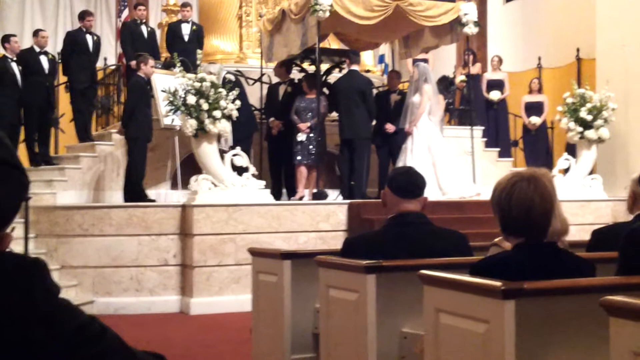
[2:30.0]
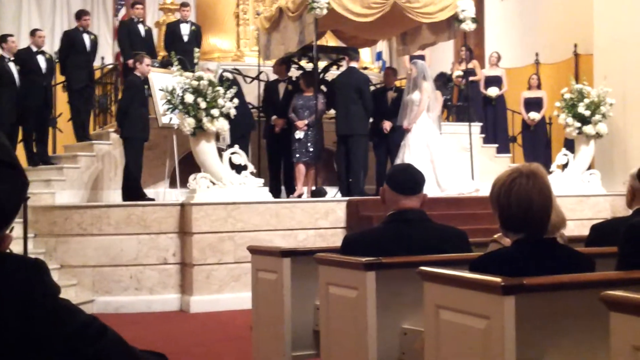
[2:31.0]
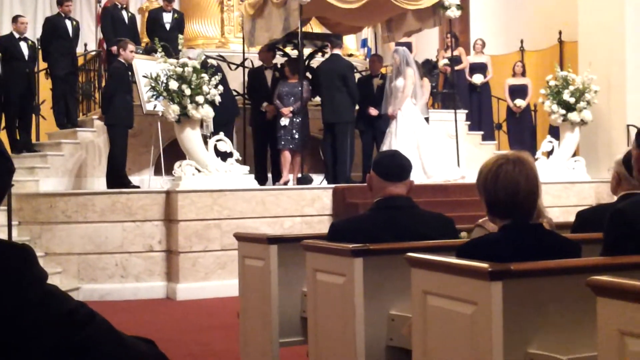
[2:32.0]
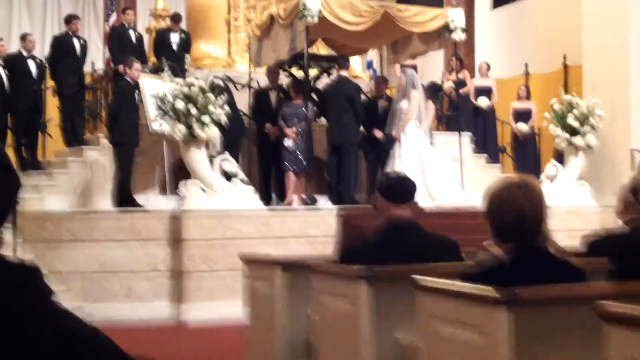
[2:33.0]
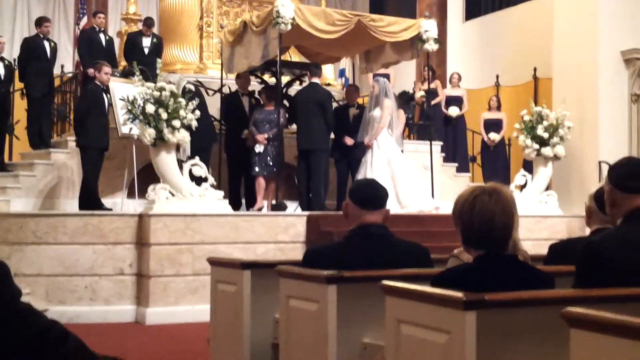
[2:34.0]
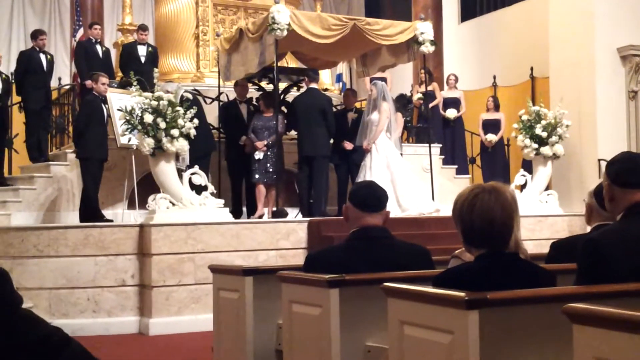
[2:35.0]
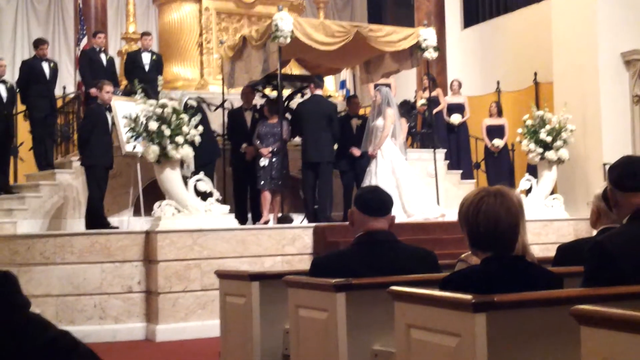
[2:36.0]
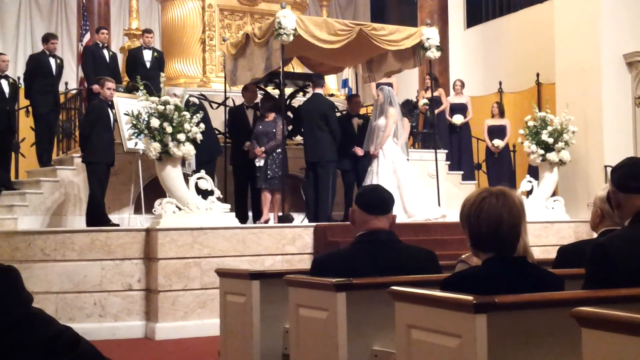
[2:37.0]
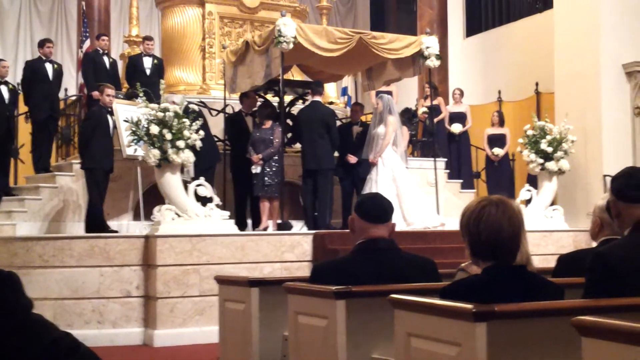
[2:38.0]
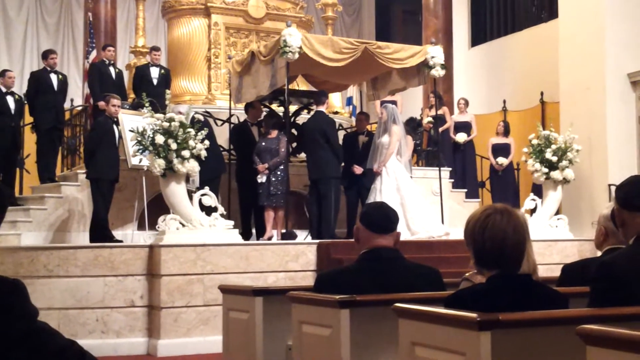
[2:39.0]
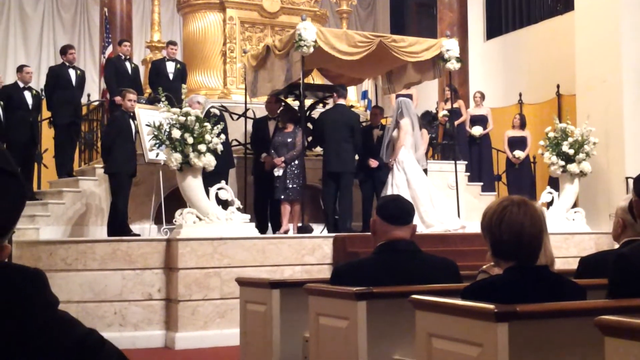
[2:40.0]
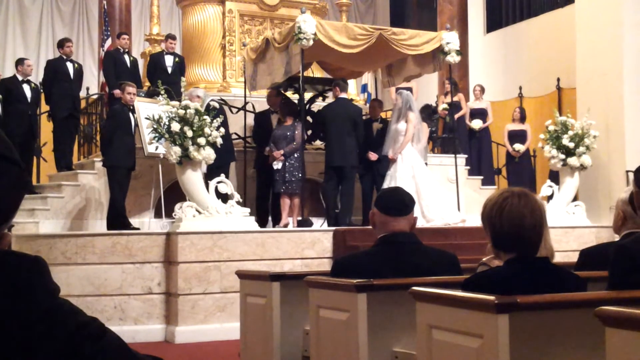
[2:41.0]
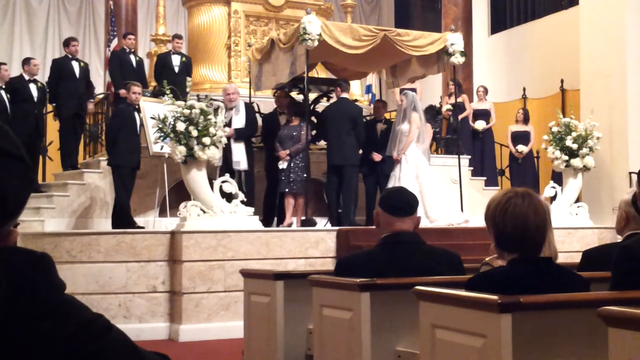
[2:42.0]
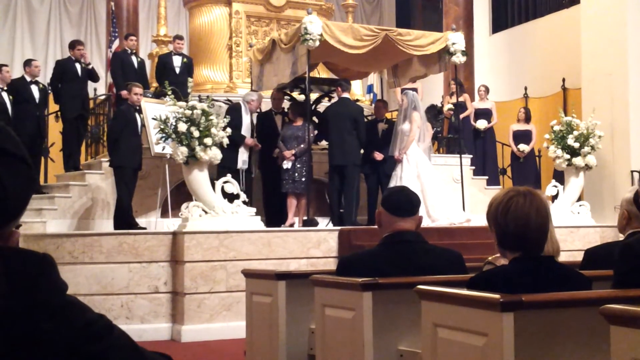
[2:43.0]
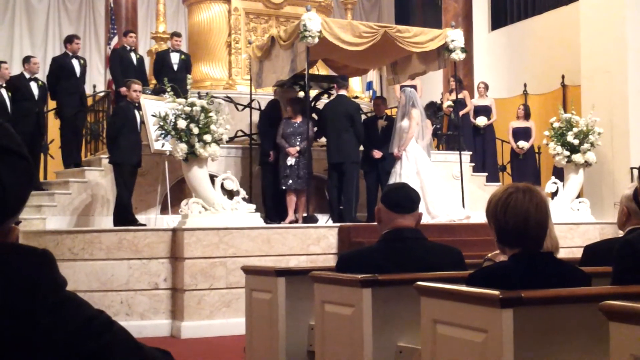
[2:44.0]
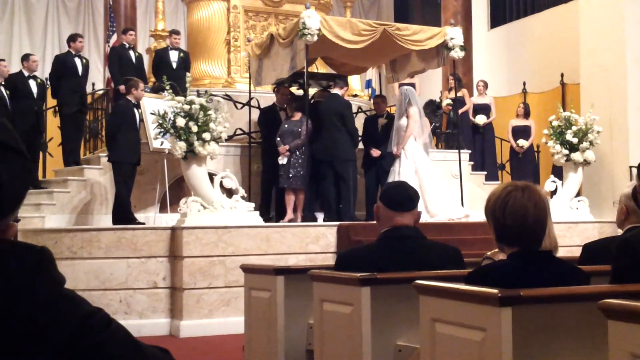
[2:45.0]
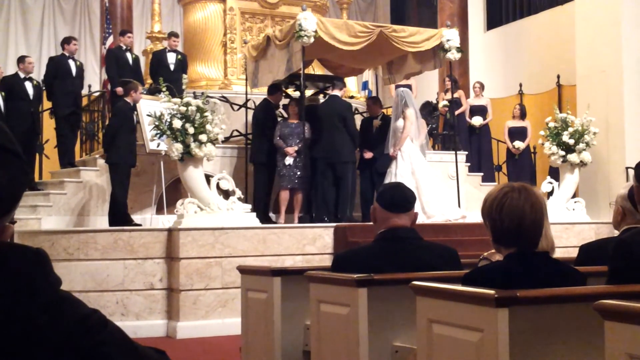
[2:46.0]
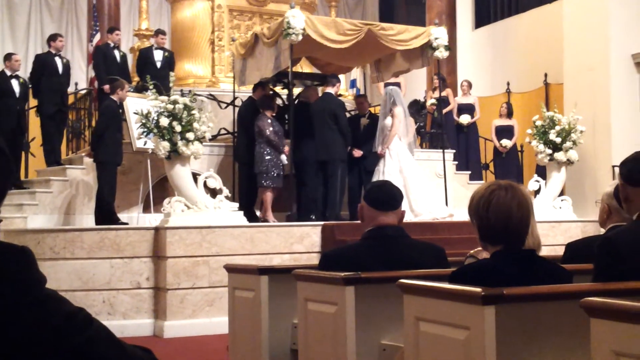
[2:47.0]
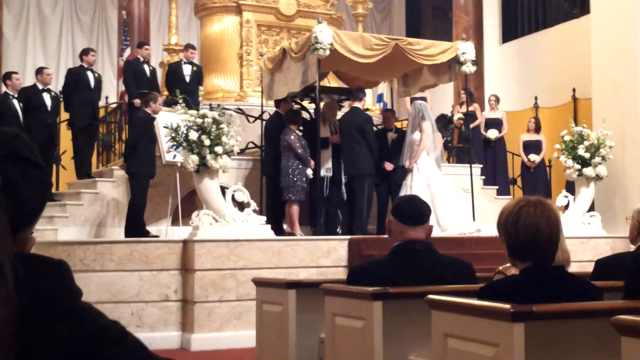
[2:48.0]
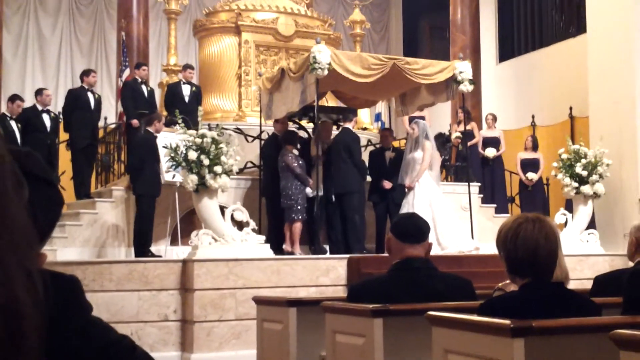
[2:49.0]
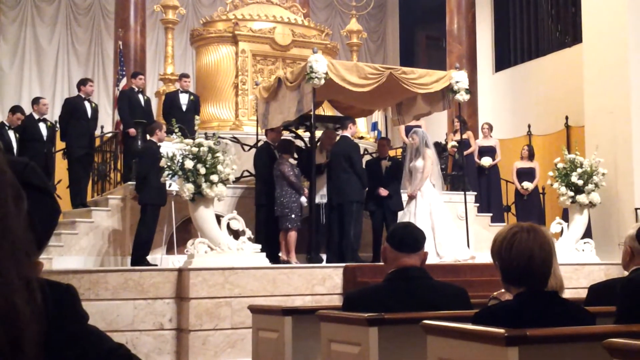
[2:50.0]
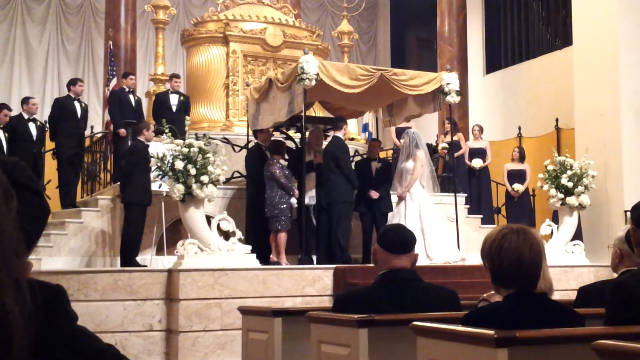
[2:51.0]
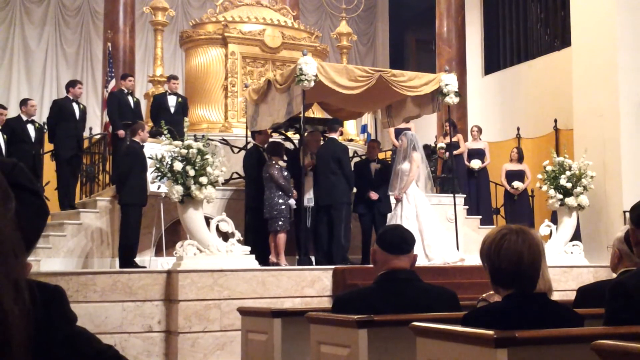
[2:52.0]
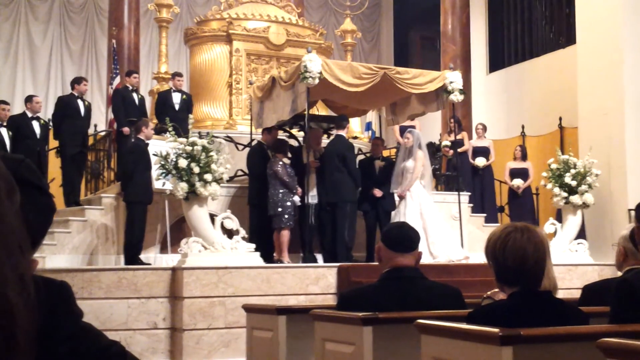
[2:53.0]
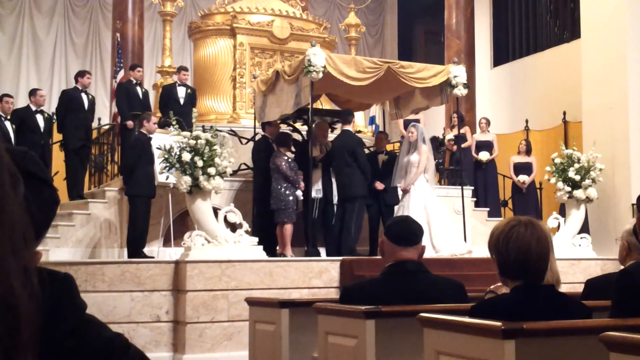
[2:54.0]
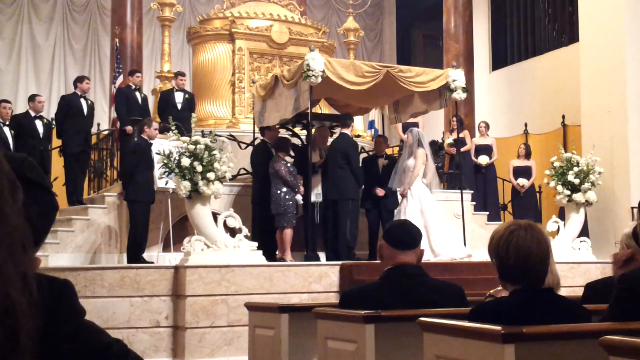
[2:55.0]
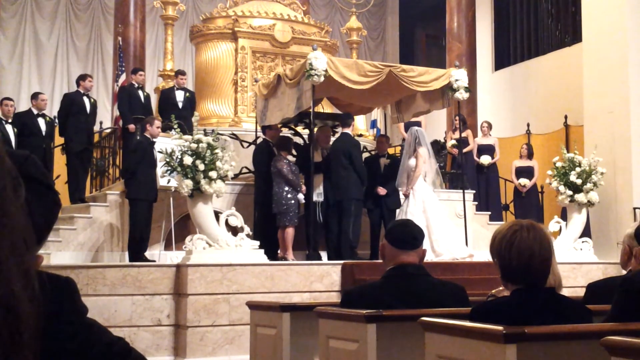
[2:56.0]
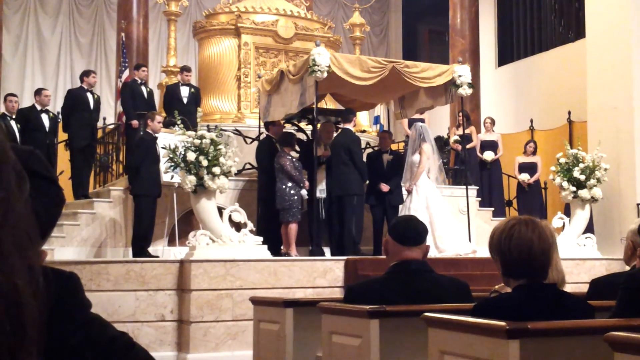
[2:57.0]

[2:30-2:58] The wedding ceremony in the church is seen from behind some pews, with the camera angled at the altar and a few people in the pews facing the altar. There is red carpet, with stone stairs leading up to the altar. Sets of stairs off to the sides lead up and behind the altar, with the groomsmen on the left and the bridesmaids on the right. A canopy with golden fabric on top and two elegant vases with bouquets of flowers make up the altar. Under the canopy, the bride and groom in traditional wedding attire face each other but look at the minister, and a few other people are also under the canopy. The minister is off to the left, not under the canopy, standing behind one of the bouquets of flowers, which obscures the view, and looking down at something. The camera work is slightly shaky throughout. The minister then turns back towards the bride and groom, walks back under the canopy, and continues the ceremony.